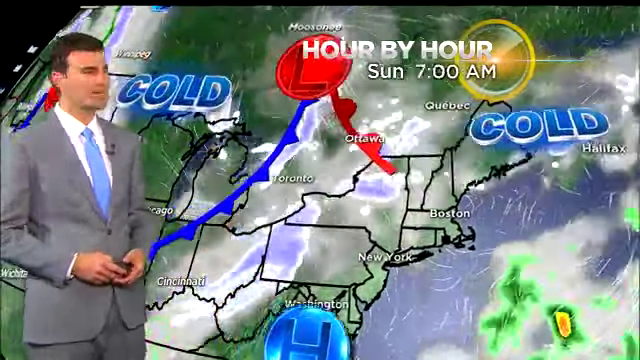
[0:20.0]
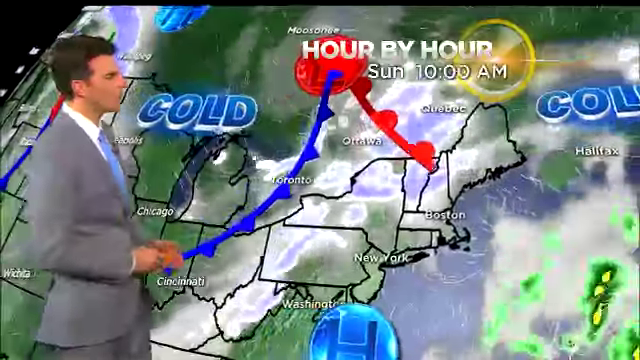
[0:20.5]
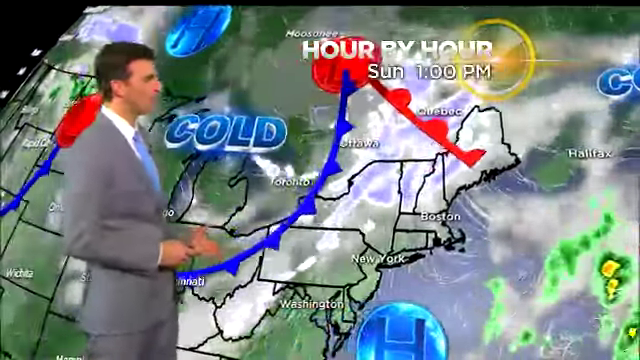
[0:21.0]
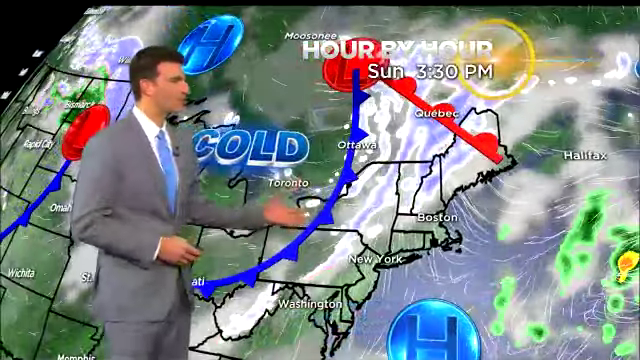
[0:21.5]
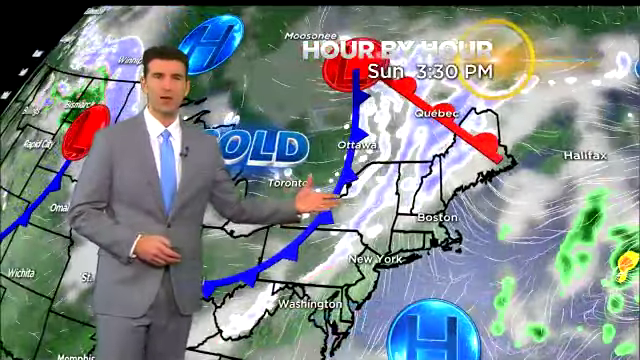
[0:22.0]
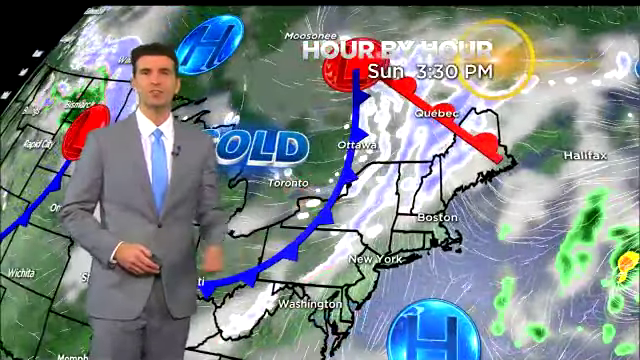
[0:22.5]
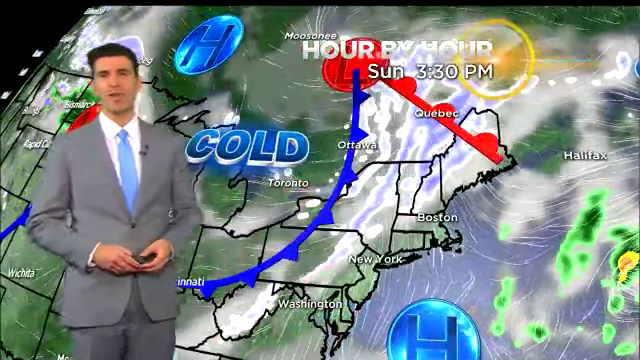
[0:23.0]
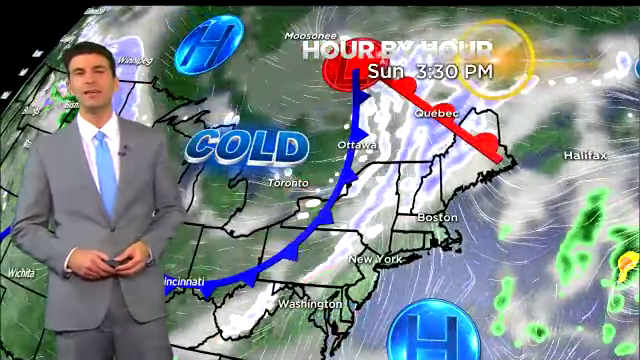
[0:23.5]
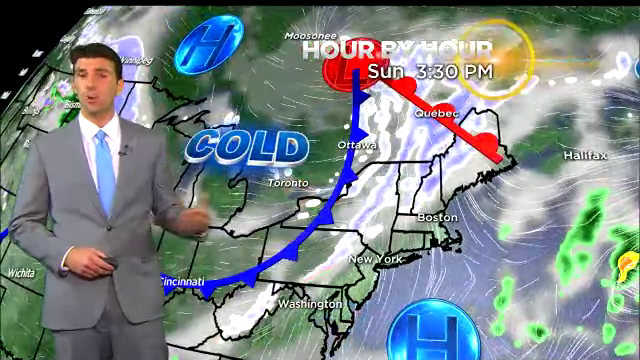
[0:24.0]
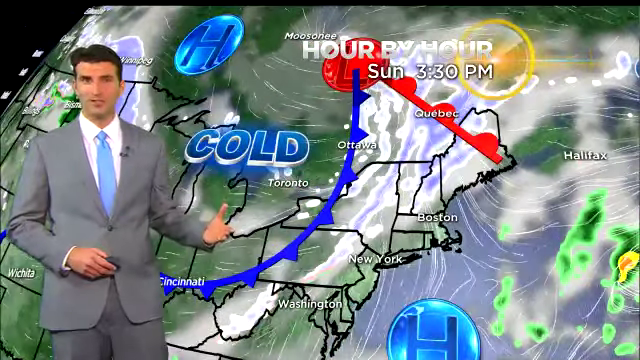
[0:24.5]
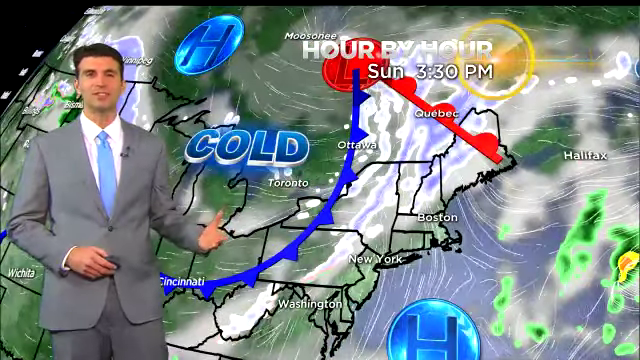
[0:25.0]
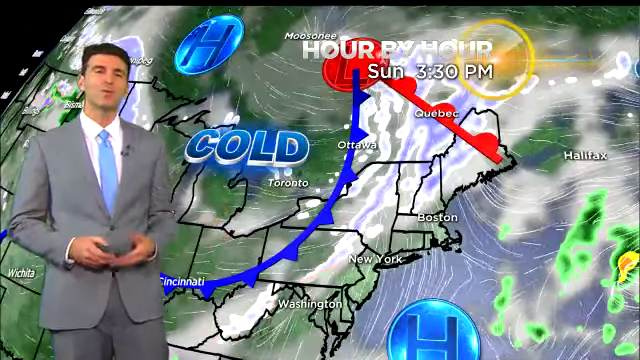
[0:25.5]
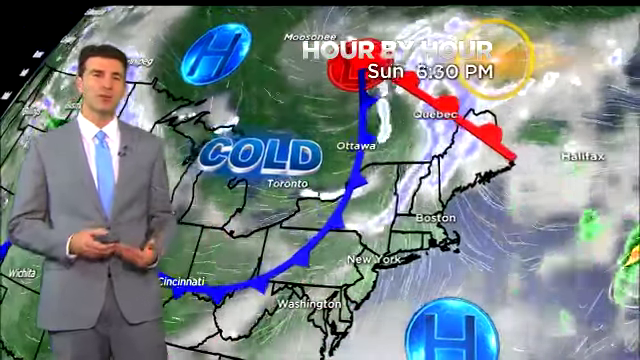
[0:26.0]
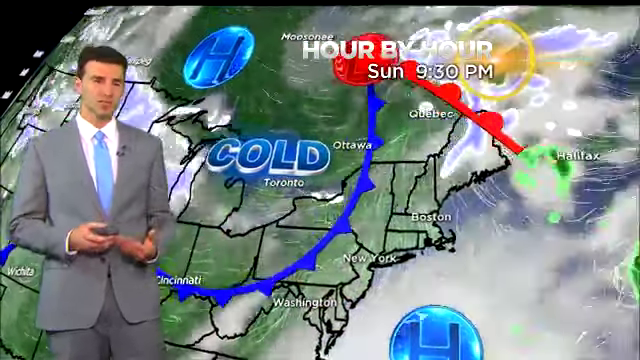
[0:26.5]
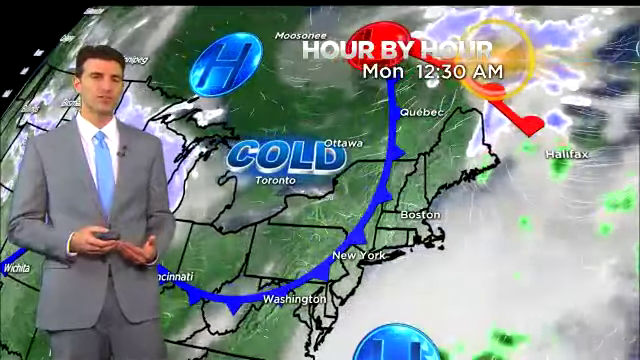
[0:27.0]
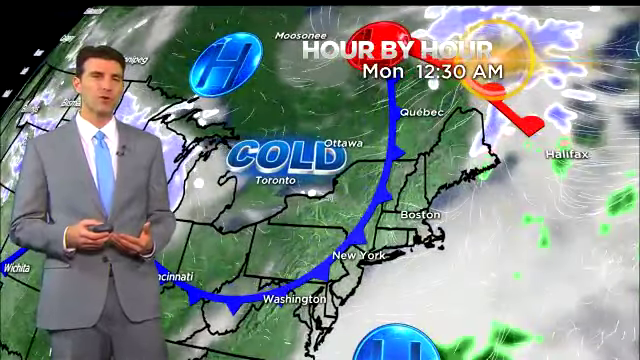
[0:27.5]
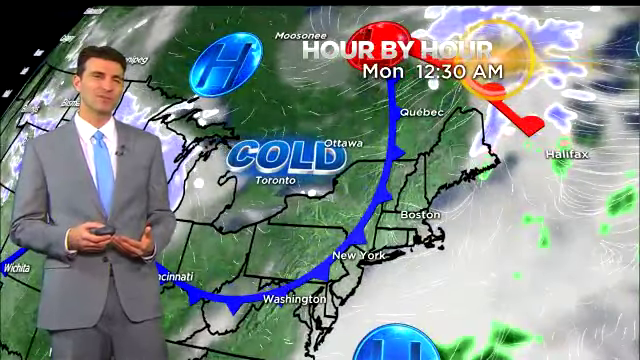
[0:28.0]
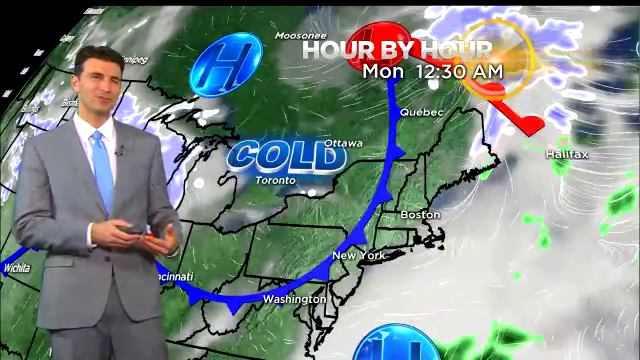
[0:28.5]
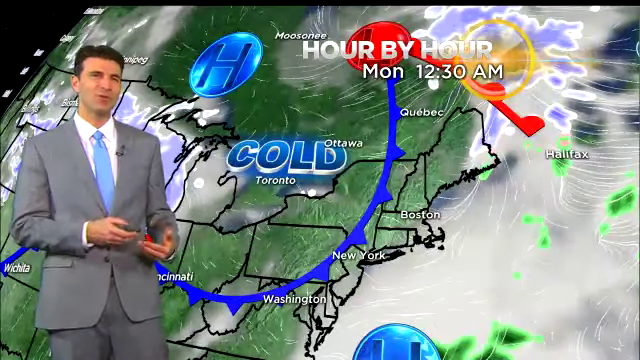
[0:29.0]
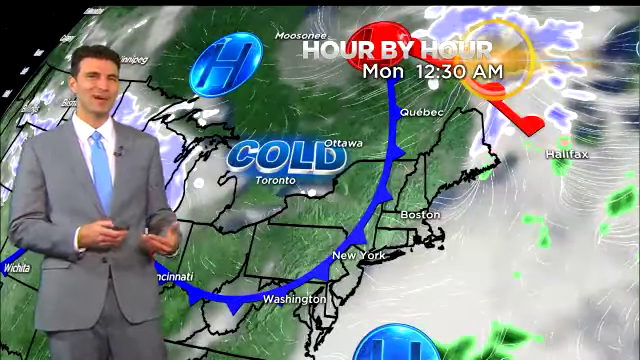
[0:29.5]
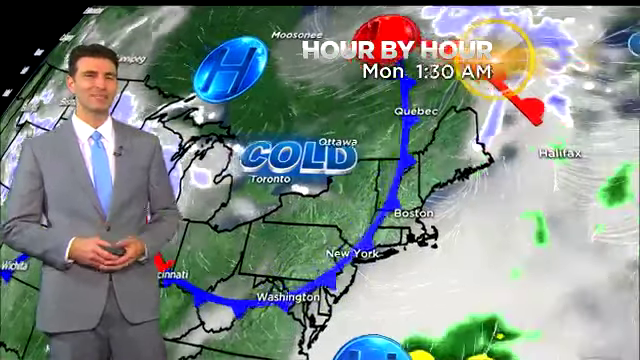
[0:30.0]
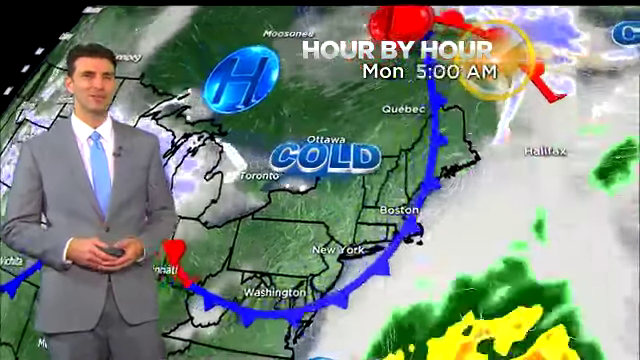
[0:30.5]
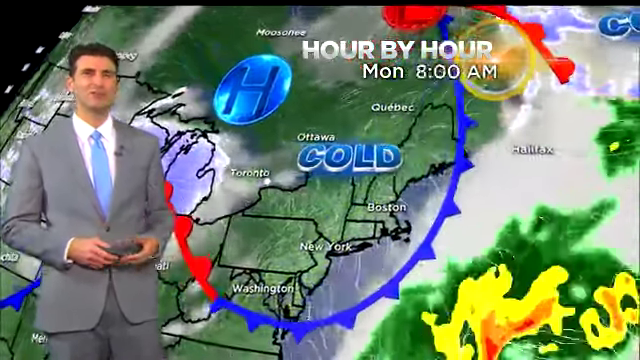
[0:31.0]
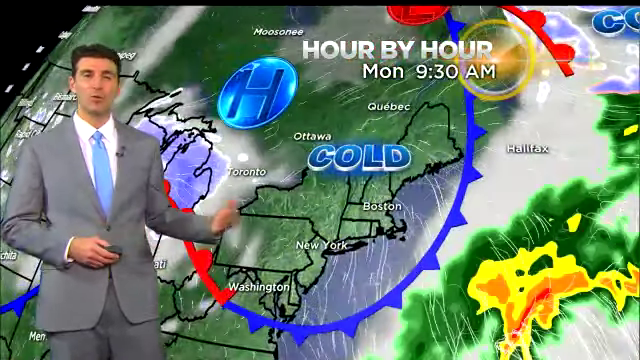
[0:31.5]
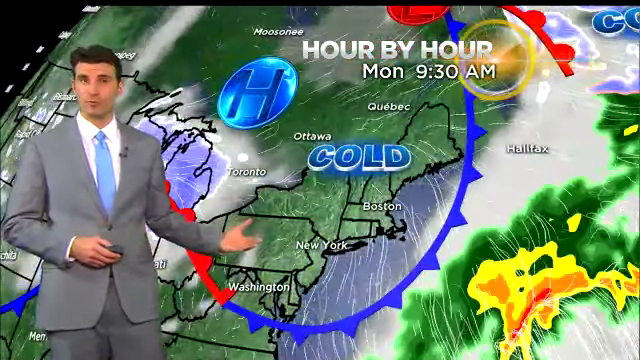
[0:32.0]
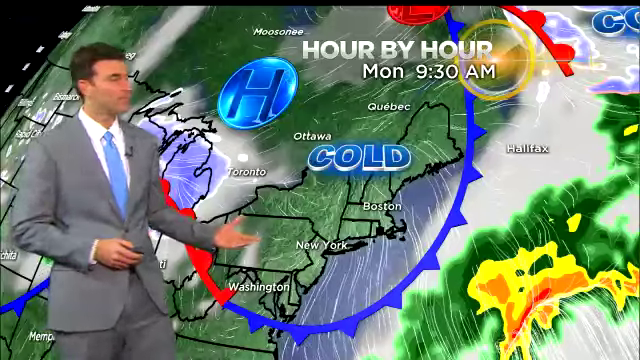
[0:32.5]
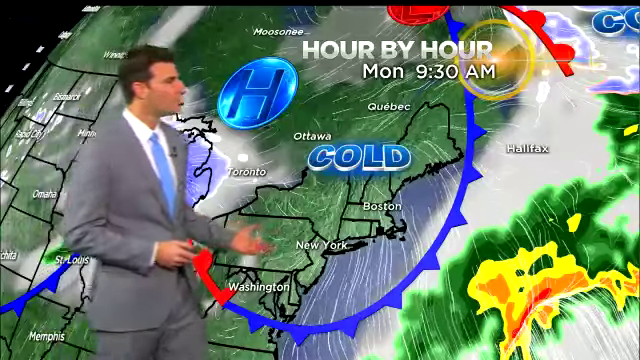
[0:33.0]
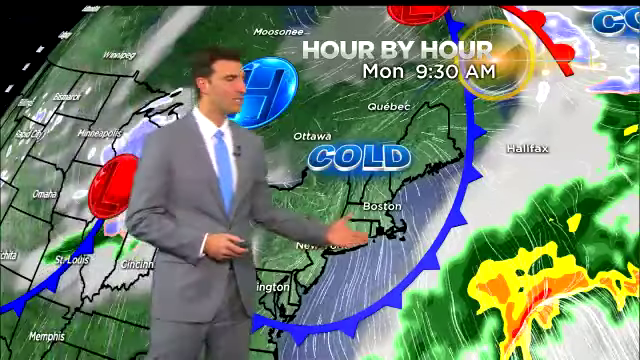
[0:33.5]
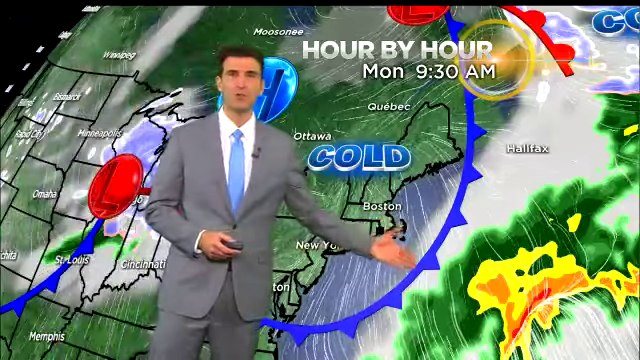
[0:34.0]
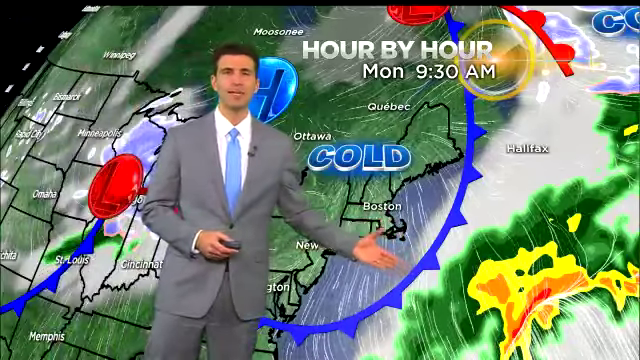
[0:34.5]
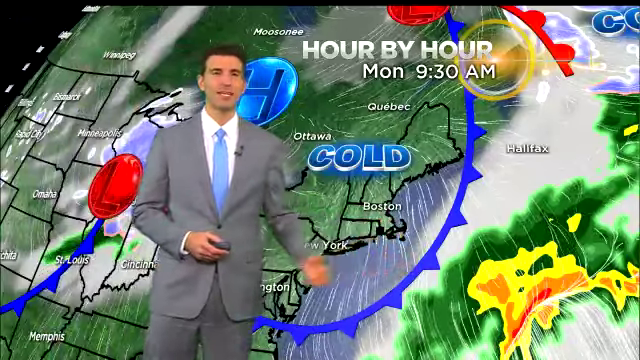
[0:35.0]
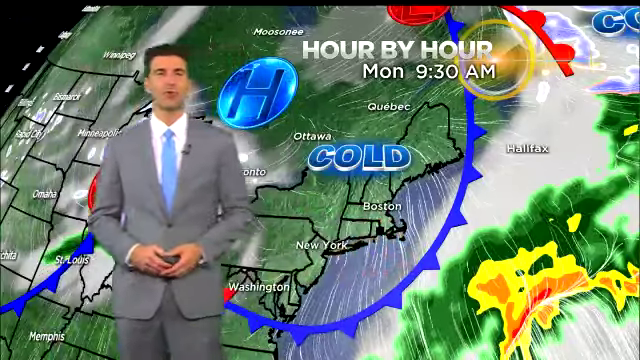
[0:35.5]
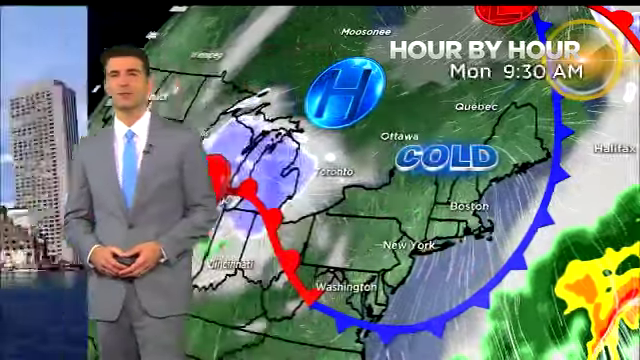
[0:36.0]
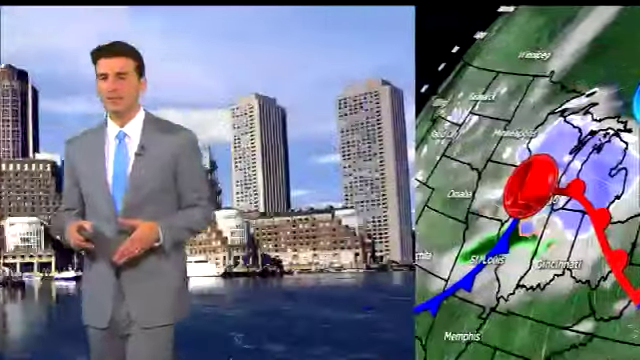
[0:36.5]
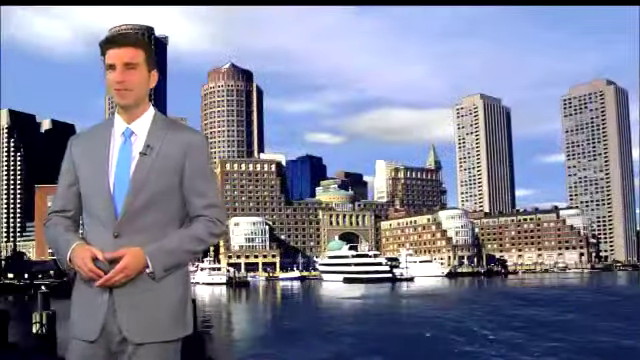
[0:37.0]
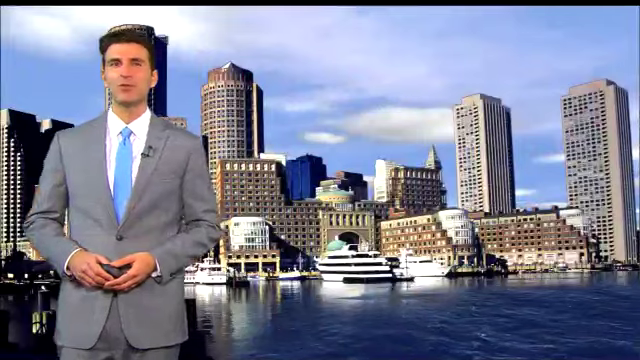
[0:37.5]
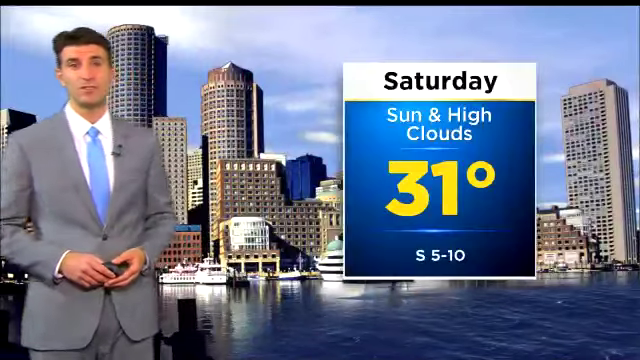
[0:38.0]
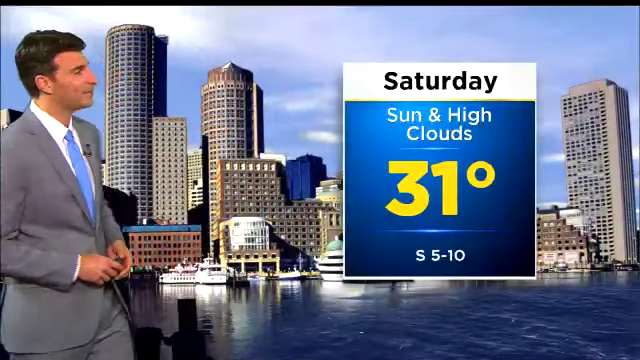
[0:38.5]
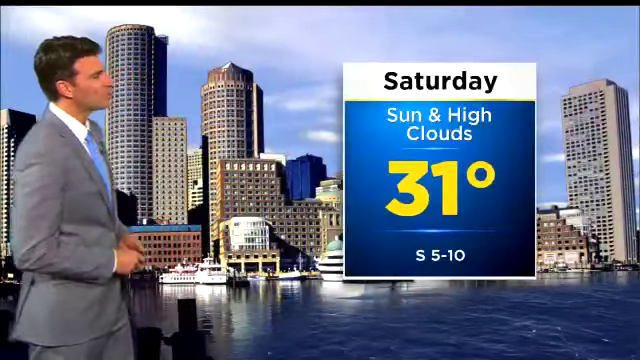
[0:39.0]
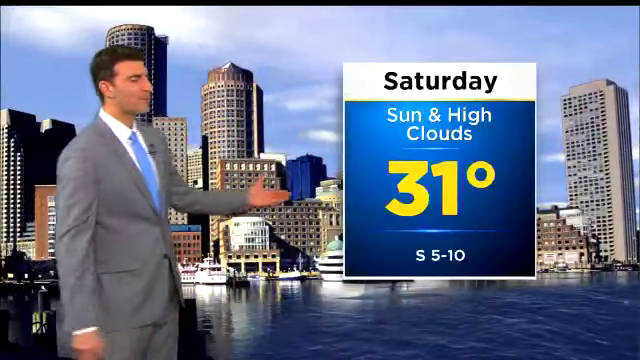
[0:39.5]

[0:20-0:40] The weather presentation continues with an hour-by-hour view for Monday at 8:30 a.m., covering Ottawa, Boston, Toronto, New York, Washington, Quebec and other places. The presenter then goes to Saturday and Sunday, where high cloud and one degree are shown.